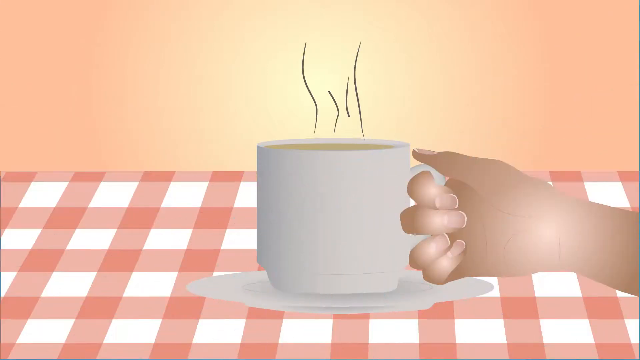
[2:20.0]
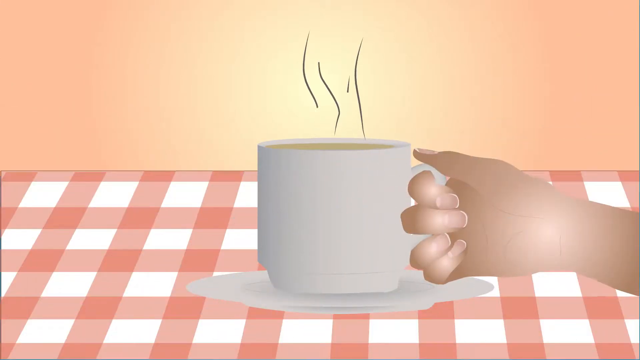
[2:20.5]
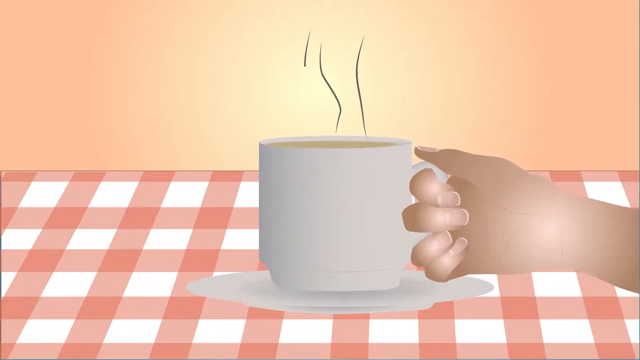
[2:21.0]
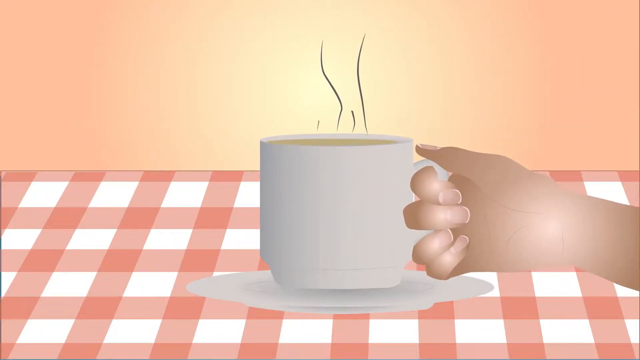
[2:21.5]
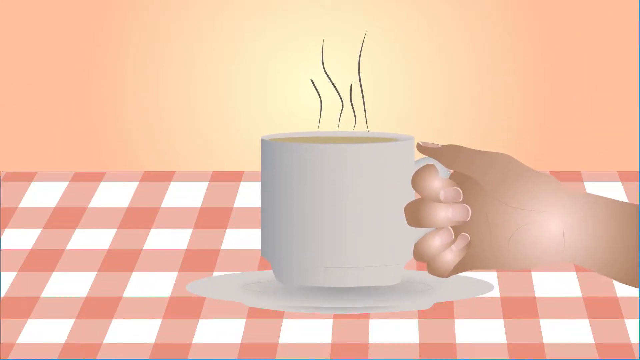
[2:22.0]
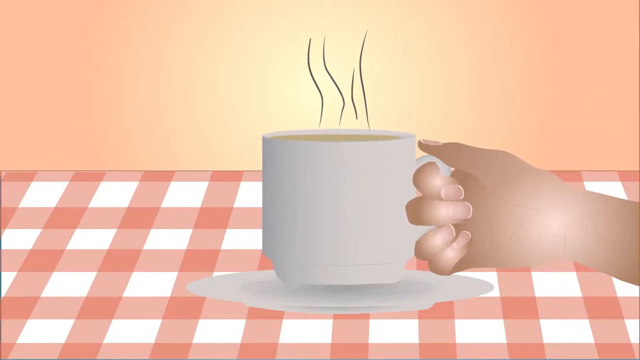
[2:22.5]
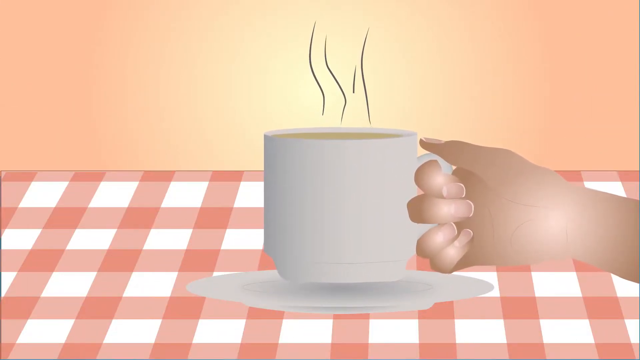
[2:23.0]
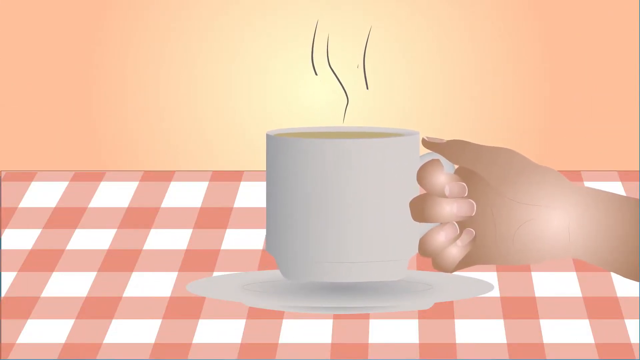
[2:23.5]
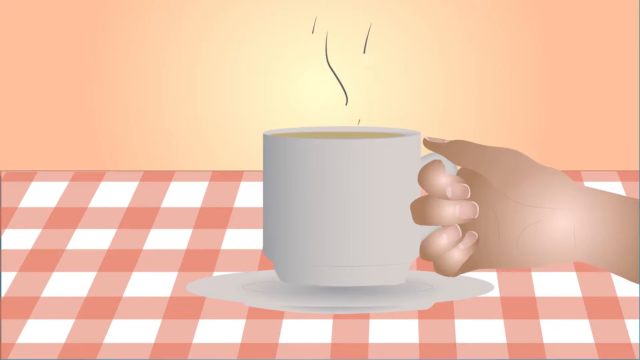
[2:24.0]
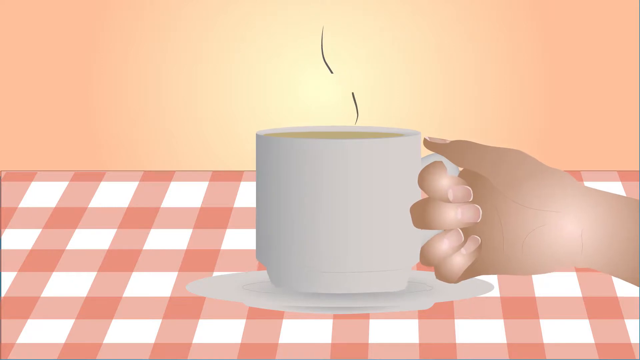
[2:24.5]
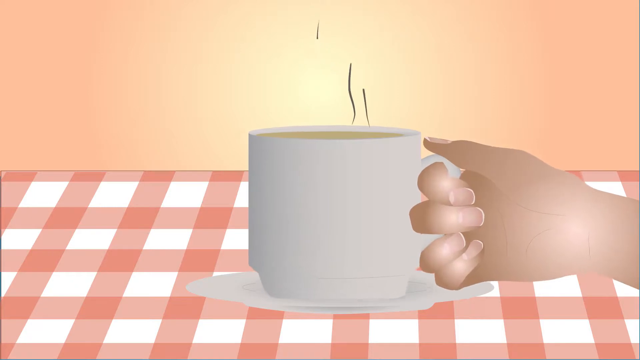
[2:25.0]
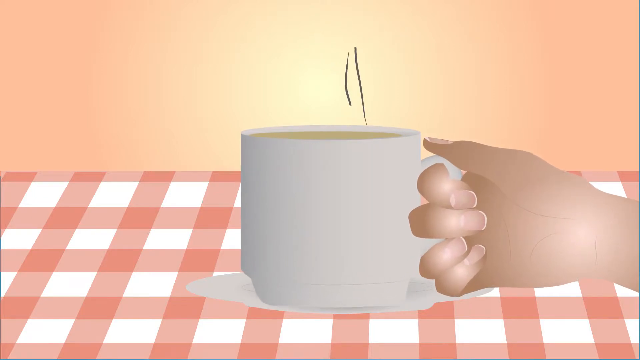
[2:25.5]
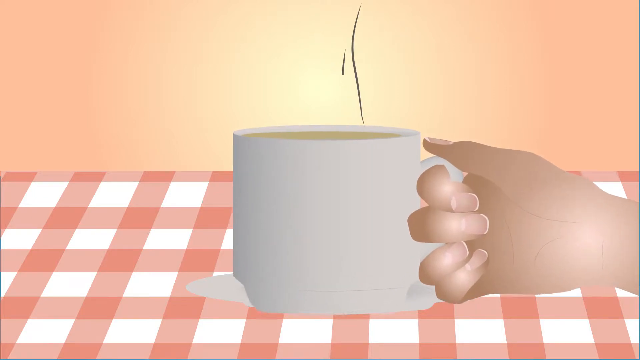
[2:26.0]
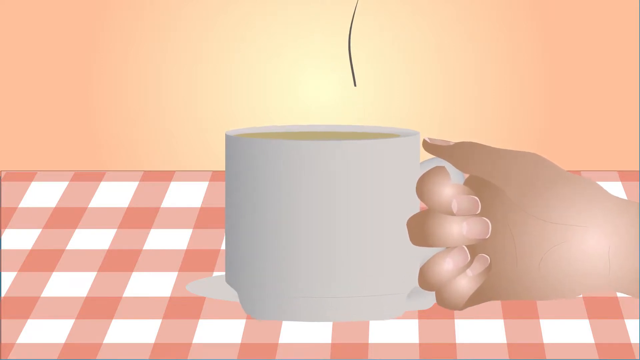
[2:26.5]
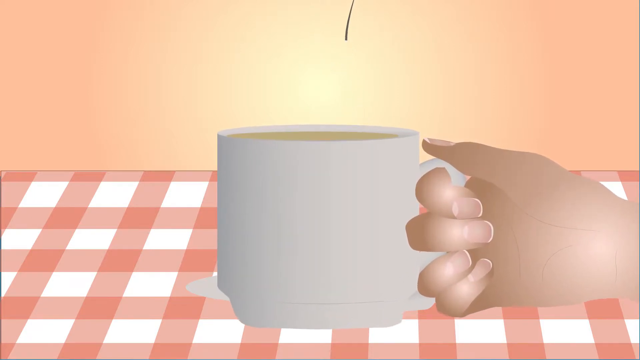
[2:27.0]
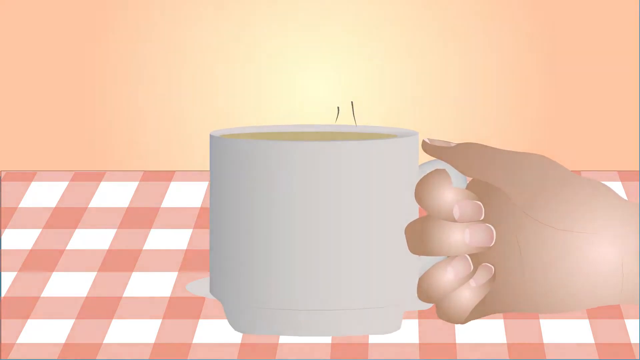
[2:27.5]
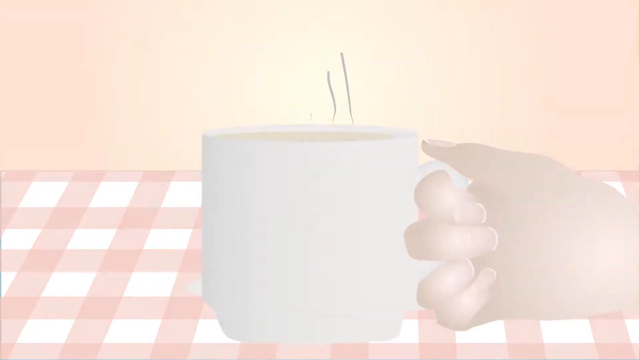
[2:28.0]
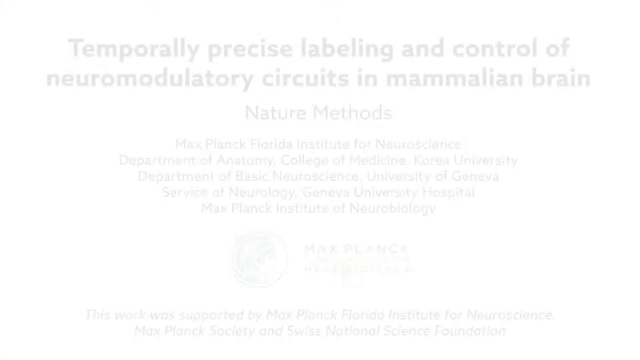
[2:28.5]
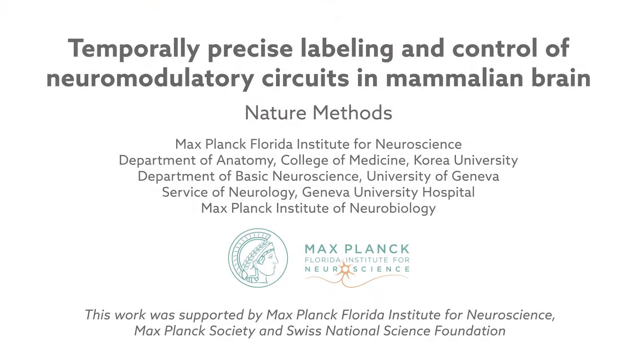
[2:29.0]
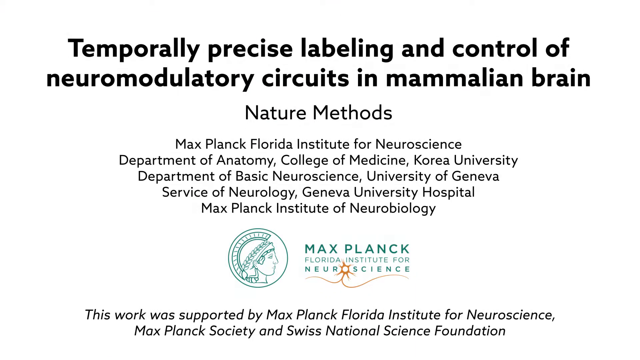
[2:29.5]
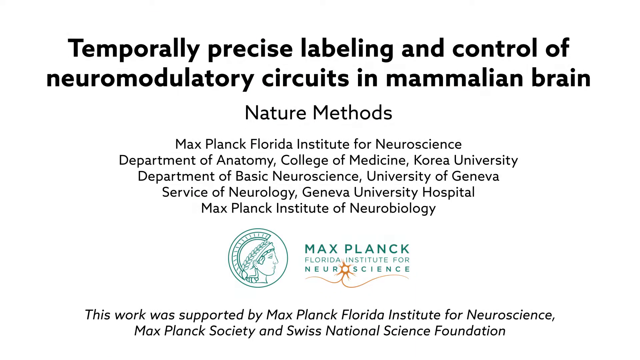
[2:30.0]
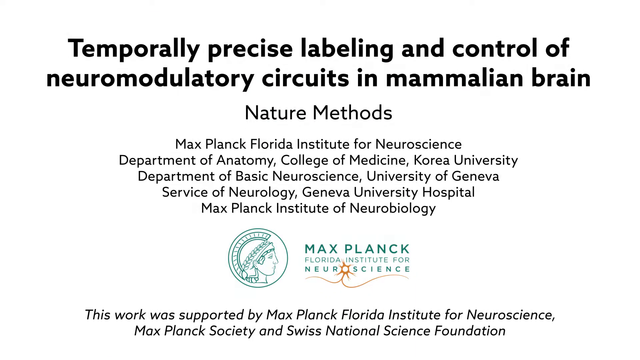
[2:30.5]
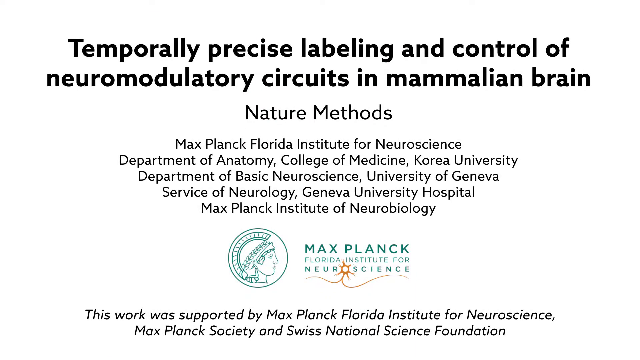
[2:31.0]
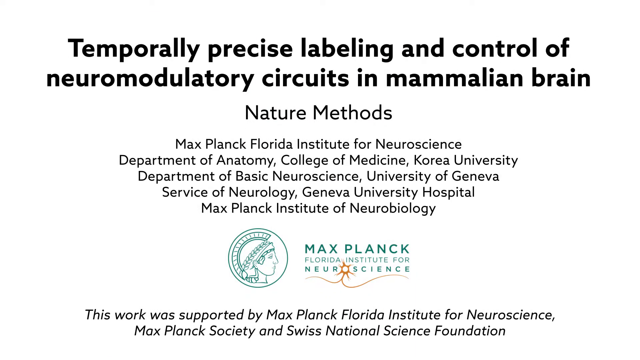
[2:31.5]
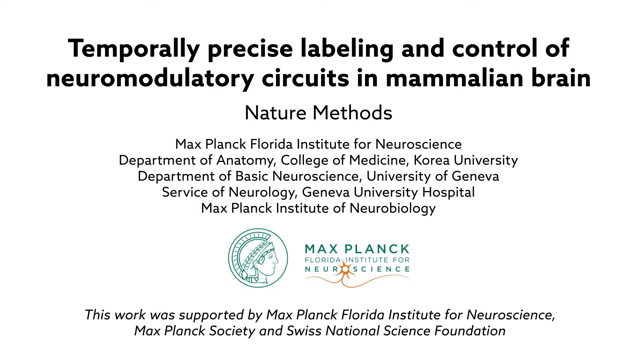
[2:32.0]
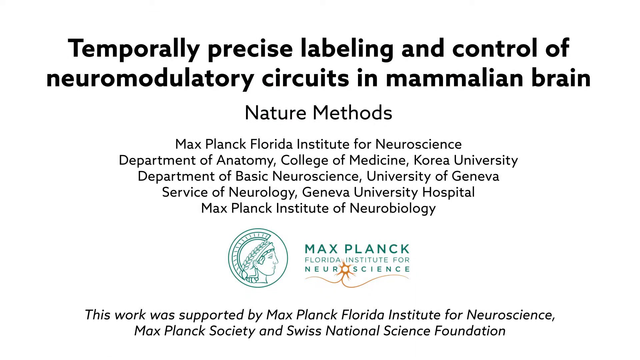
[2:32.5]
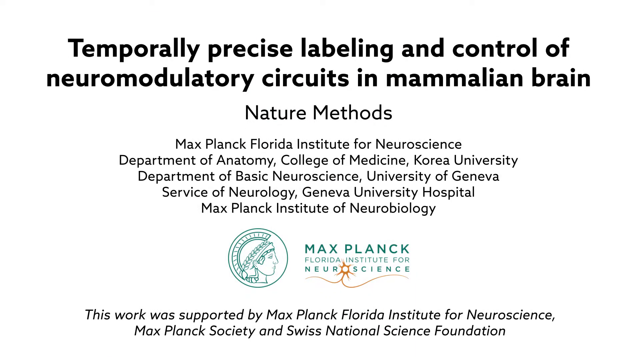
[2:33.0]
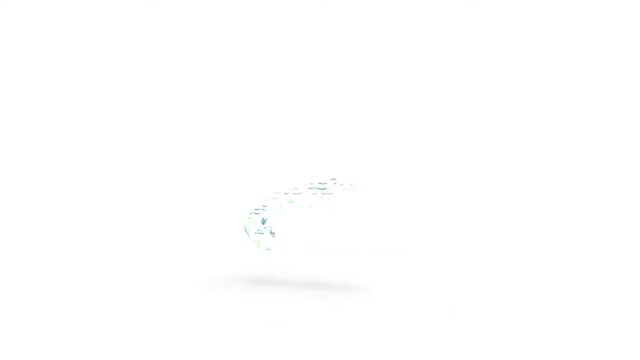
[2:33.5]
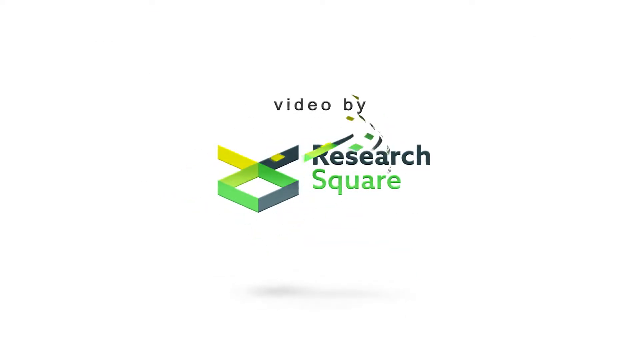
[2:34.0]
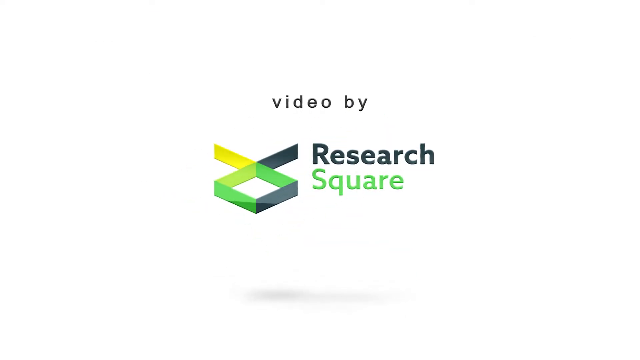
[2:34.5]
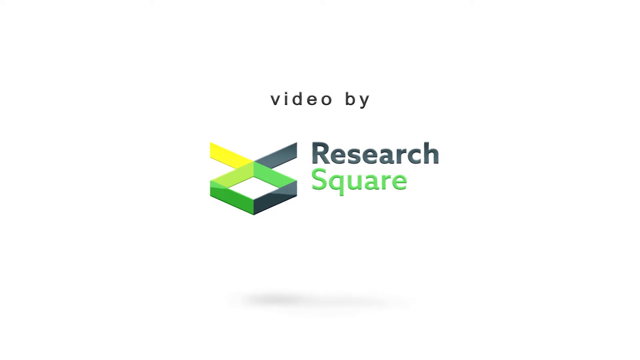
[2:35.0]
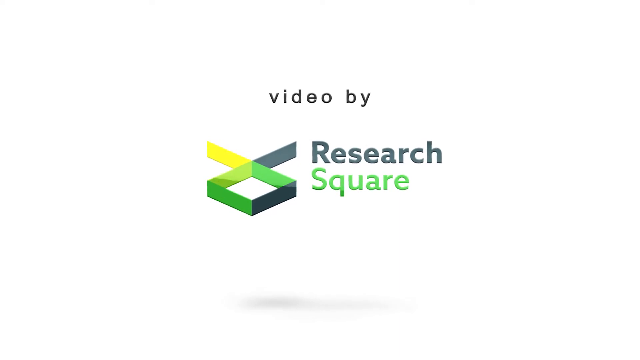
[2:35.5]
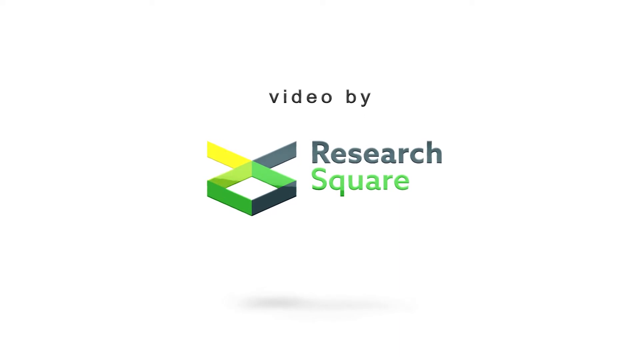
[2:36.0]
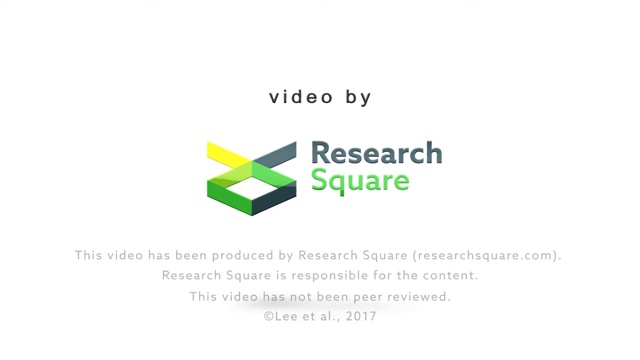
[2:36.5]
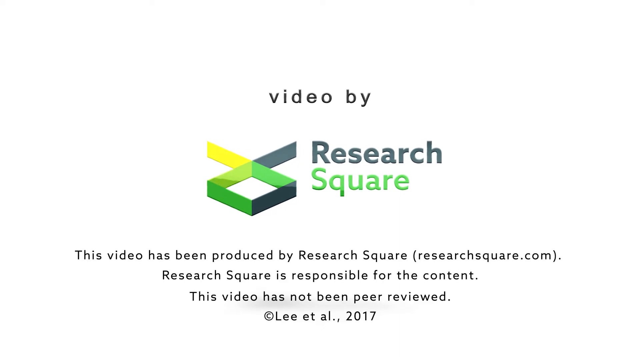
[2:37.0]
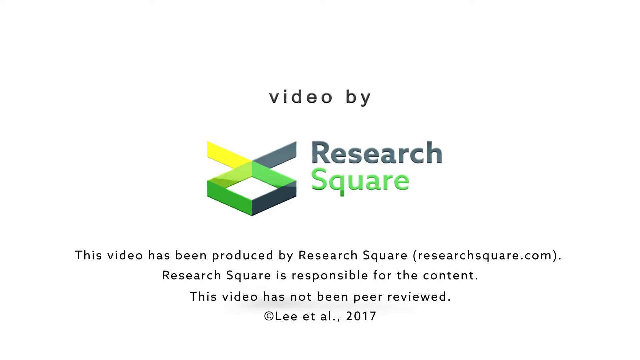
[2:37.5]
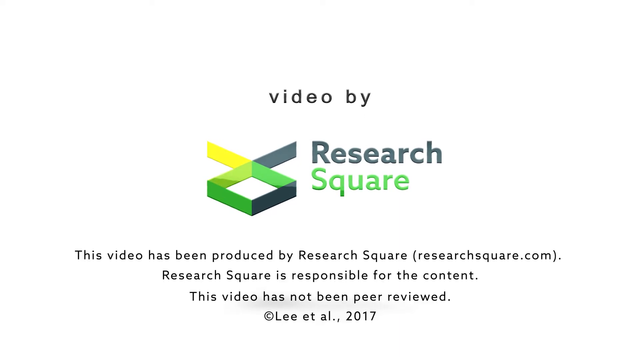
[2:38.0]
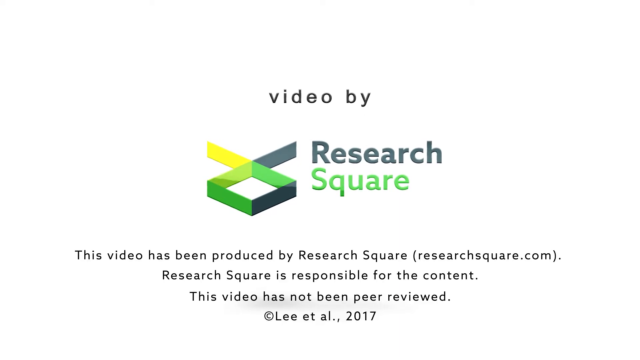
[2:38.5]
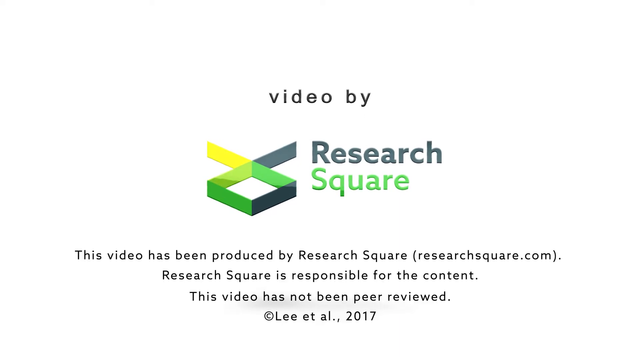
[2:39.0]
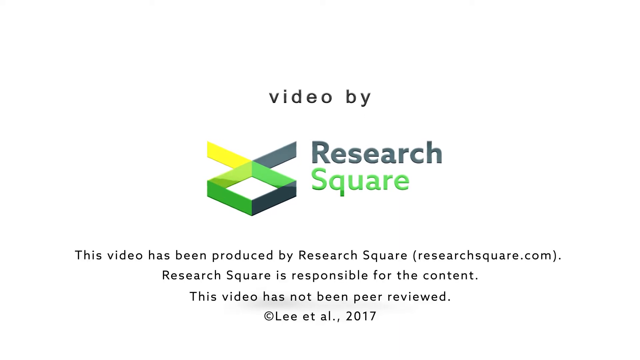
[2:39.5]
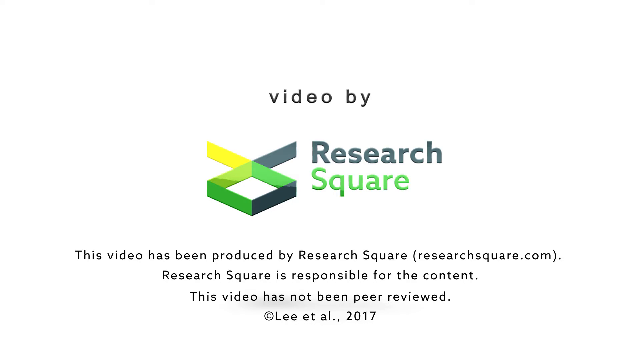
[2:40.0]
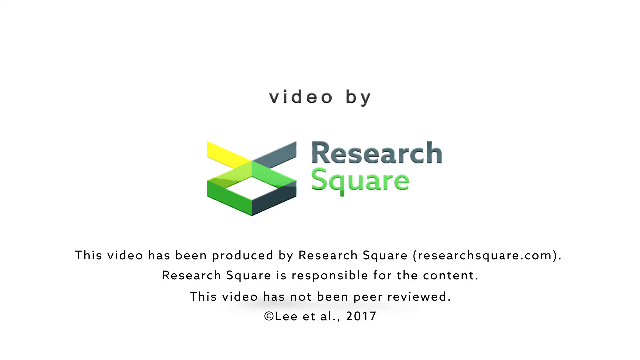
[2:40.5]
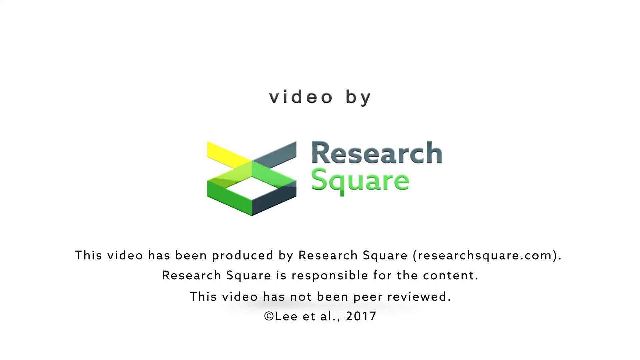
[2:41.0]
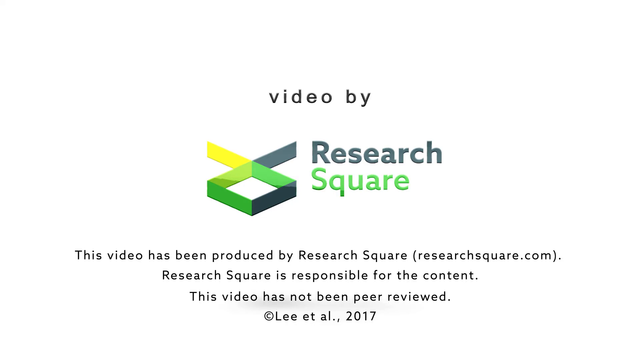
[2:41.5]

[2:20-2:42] The person holds the cup of coffee with their right hand, and a smoke animation of thin lines rises from the coffee. The coffee is a creamy brown, the mug is tan, and the plate is about the same color. They are on a red and white flannel-colored table with an orange wall in the background. The scene fades to white, and an end screen reads "temporarily precise labeling and control of neuromodulary circuits in the mammalian brain" and states that the video is by Research Square.